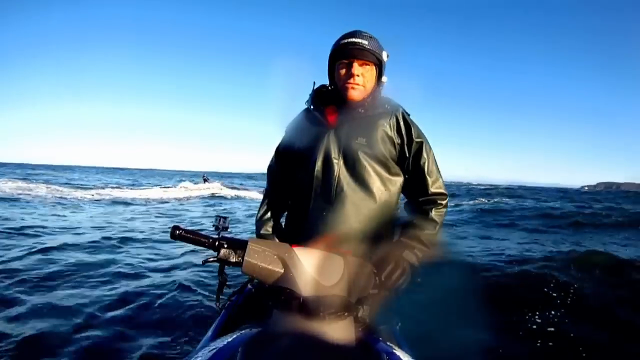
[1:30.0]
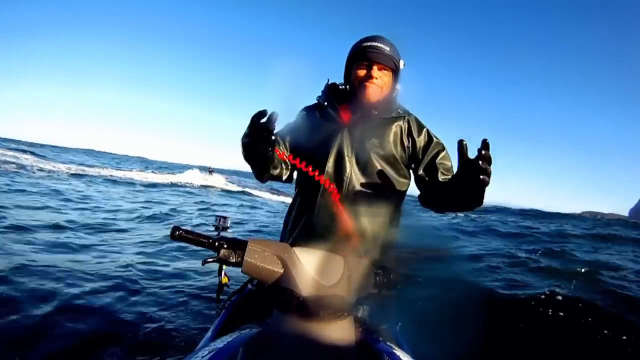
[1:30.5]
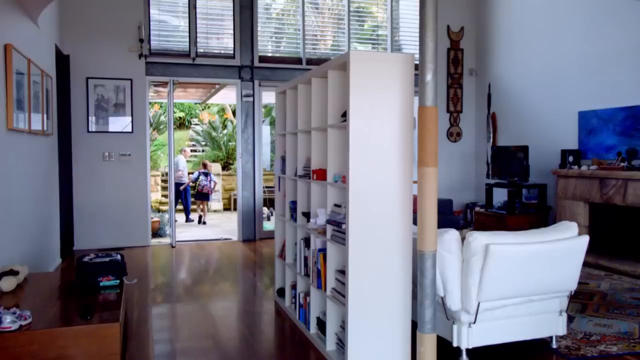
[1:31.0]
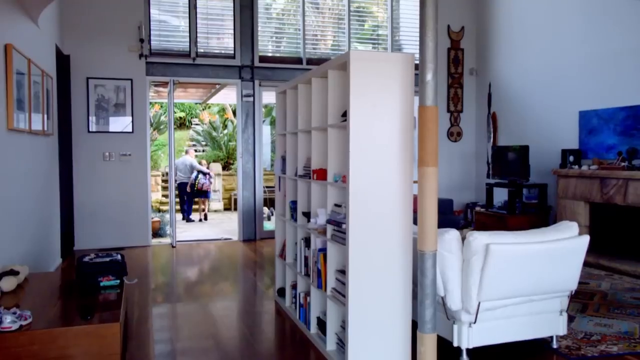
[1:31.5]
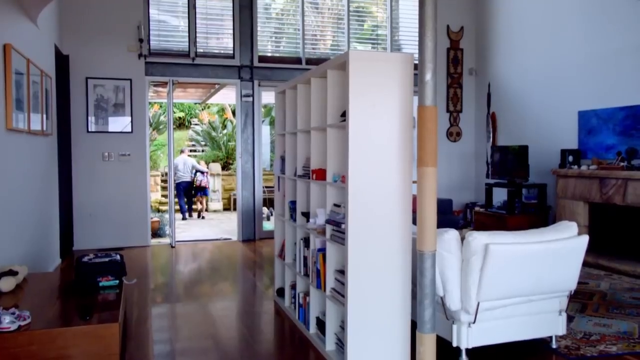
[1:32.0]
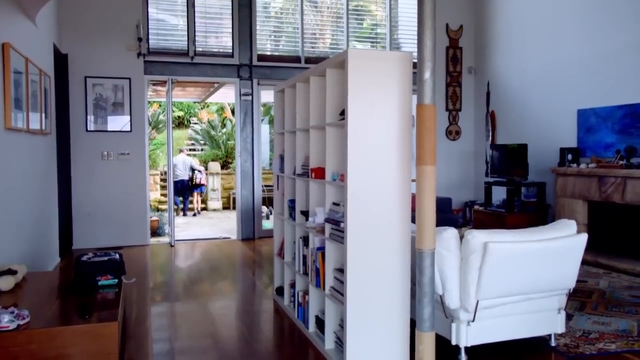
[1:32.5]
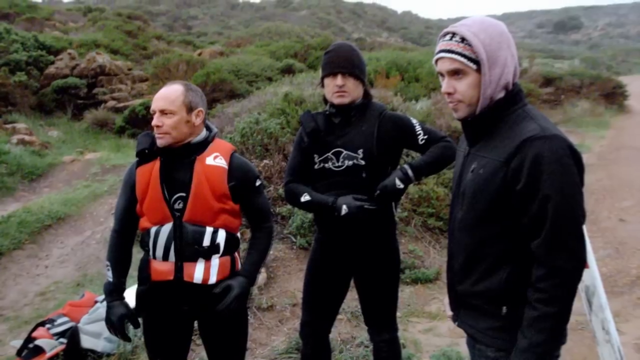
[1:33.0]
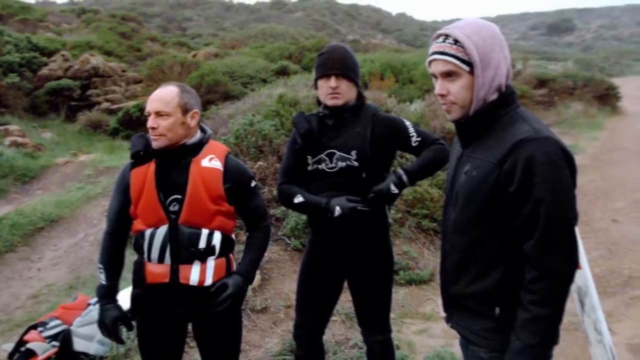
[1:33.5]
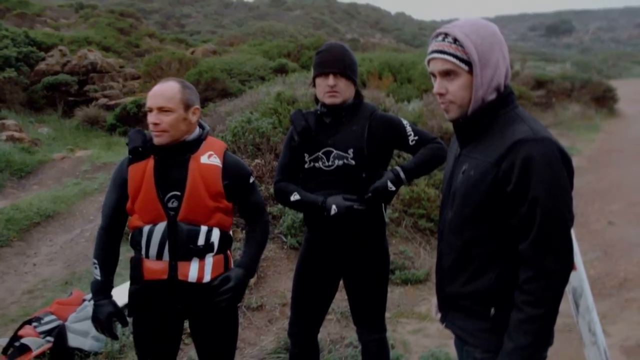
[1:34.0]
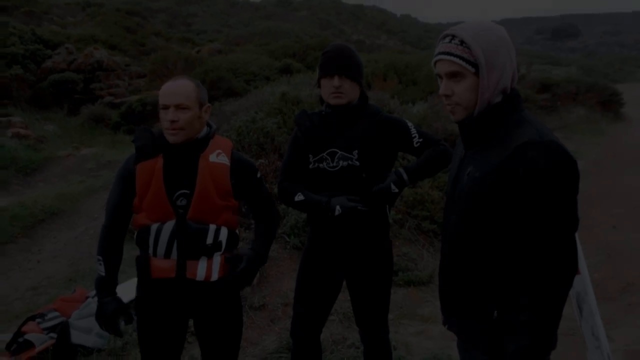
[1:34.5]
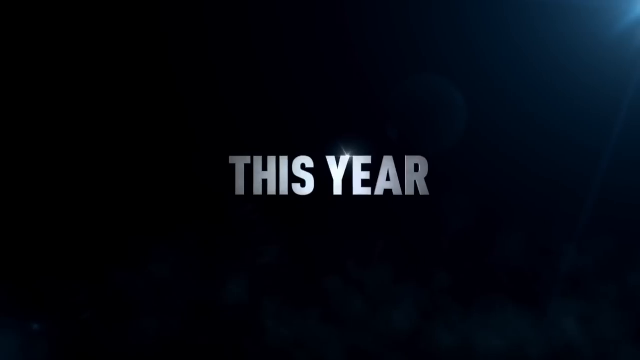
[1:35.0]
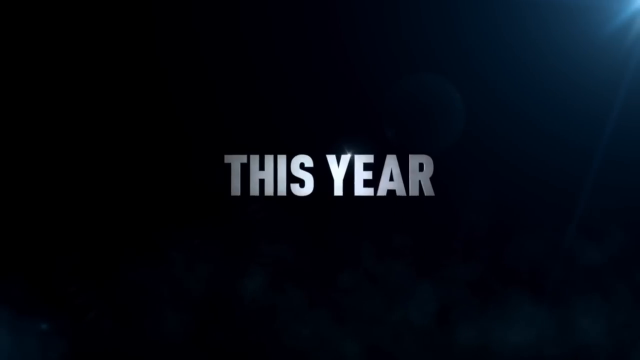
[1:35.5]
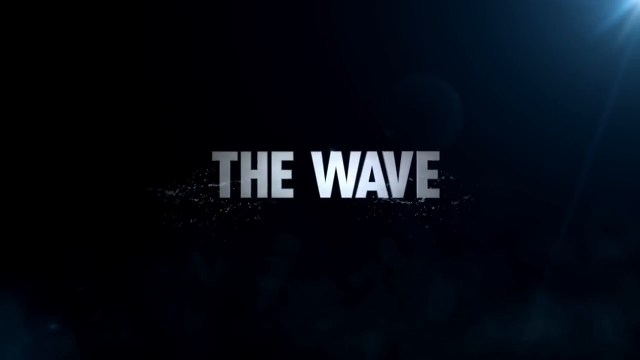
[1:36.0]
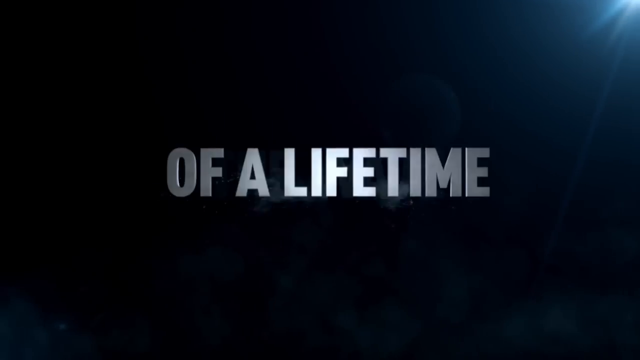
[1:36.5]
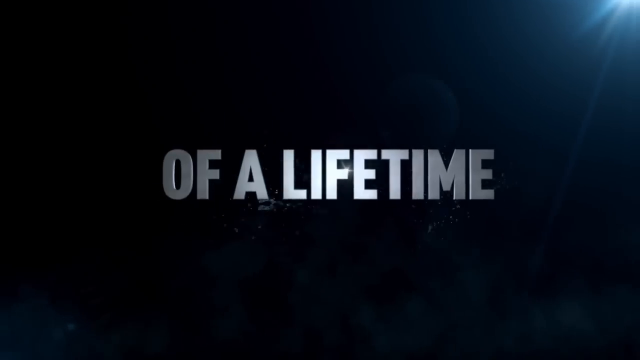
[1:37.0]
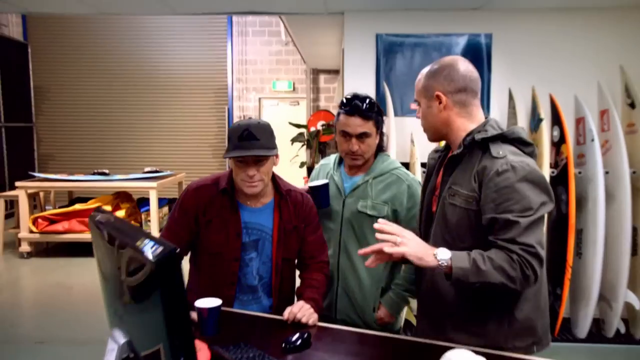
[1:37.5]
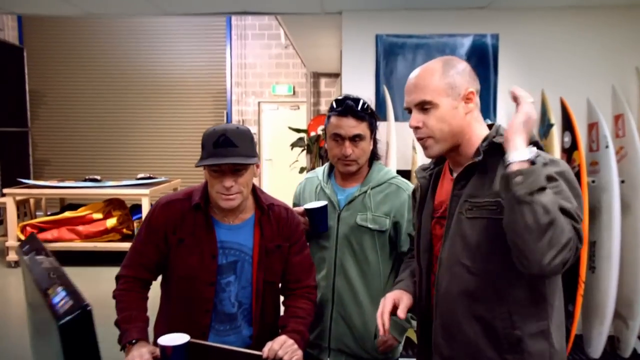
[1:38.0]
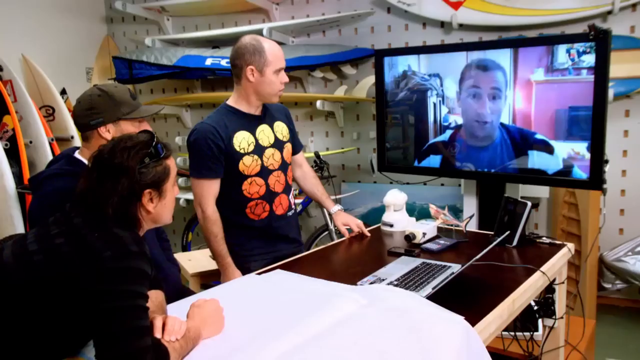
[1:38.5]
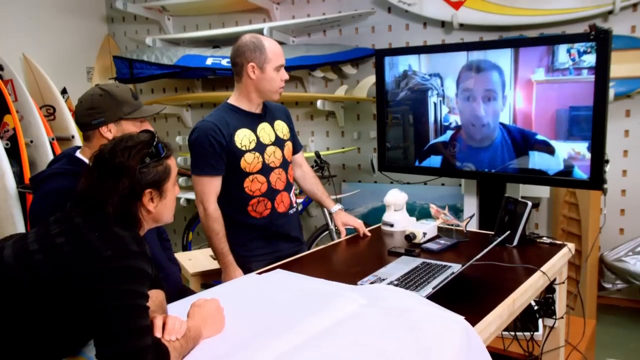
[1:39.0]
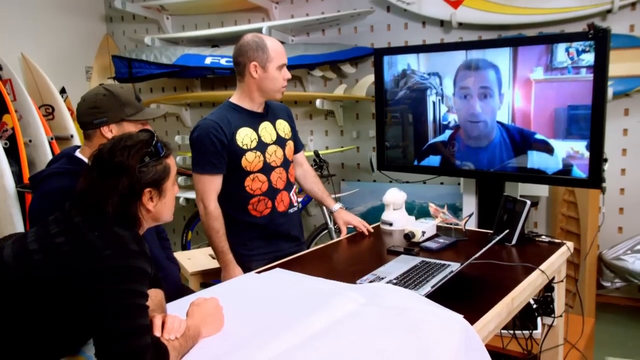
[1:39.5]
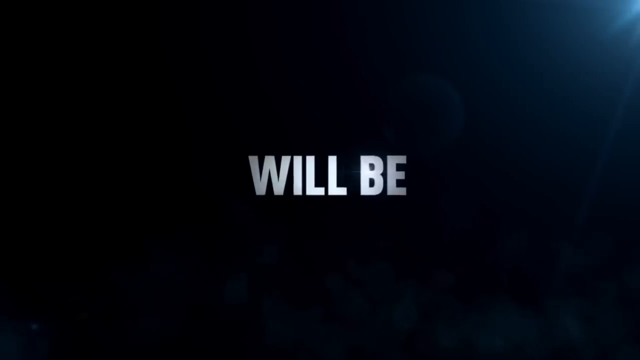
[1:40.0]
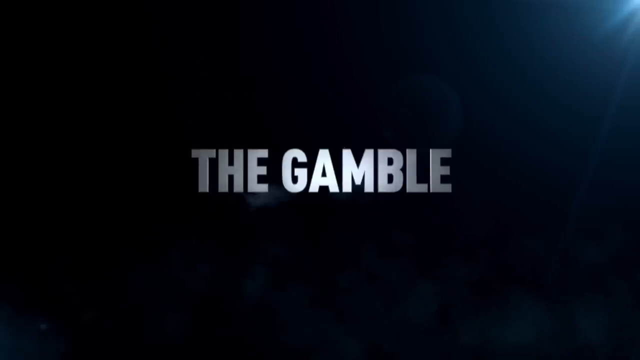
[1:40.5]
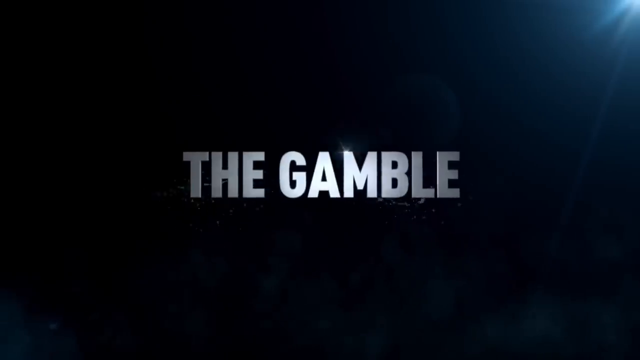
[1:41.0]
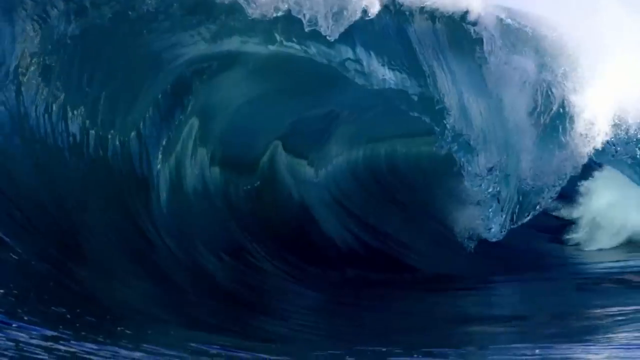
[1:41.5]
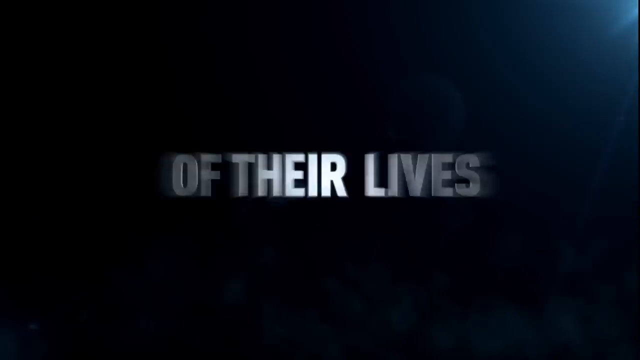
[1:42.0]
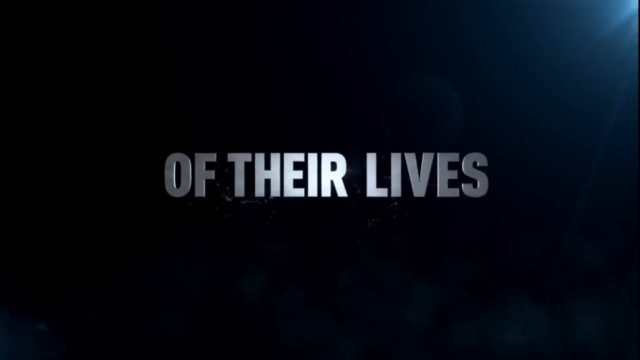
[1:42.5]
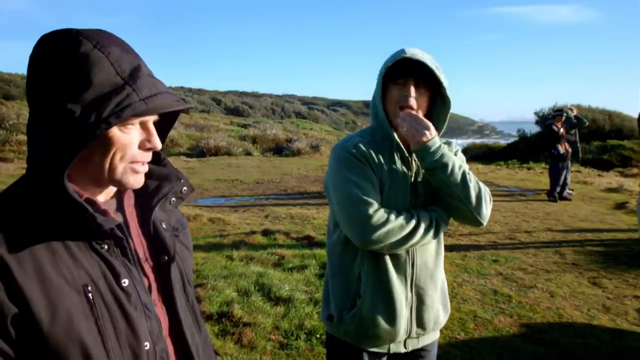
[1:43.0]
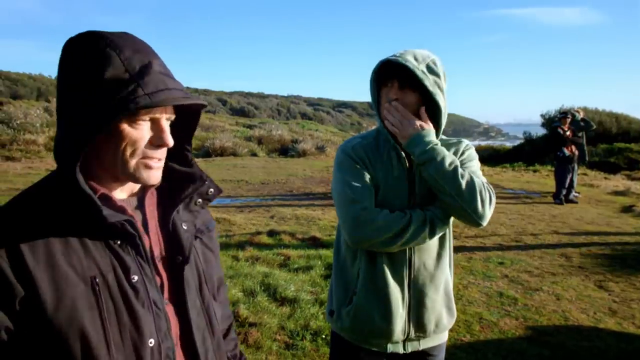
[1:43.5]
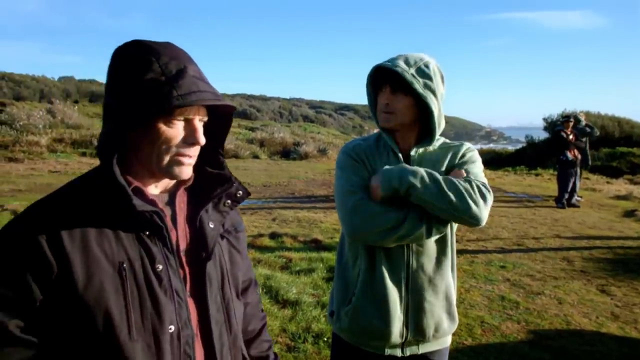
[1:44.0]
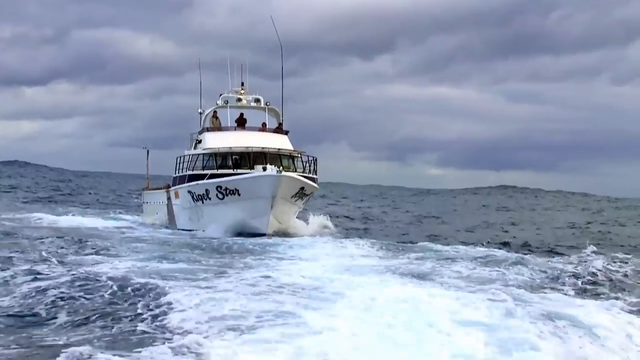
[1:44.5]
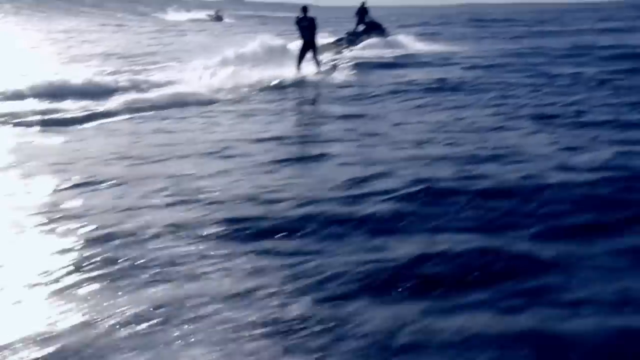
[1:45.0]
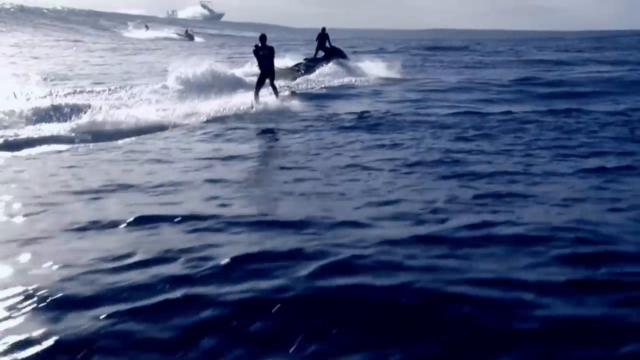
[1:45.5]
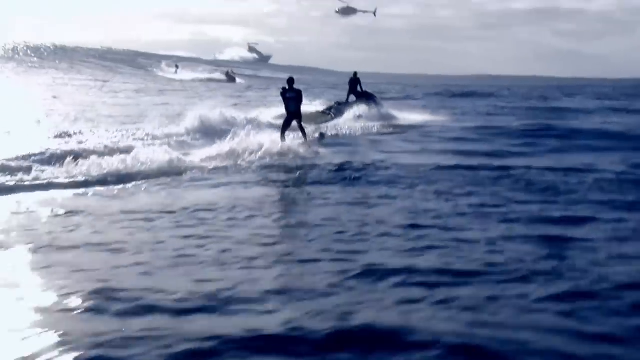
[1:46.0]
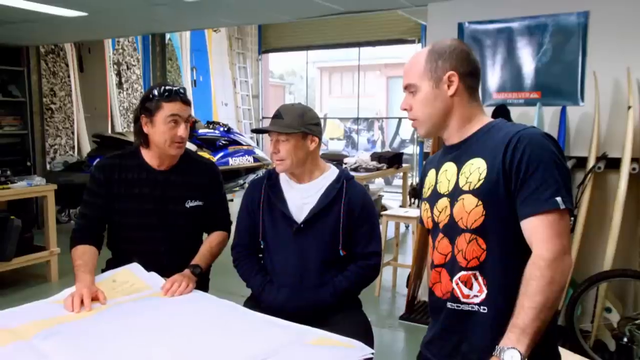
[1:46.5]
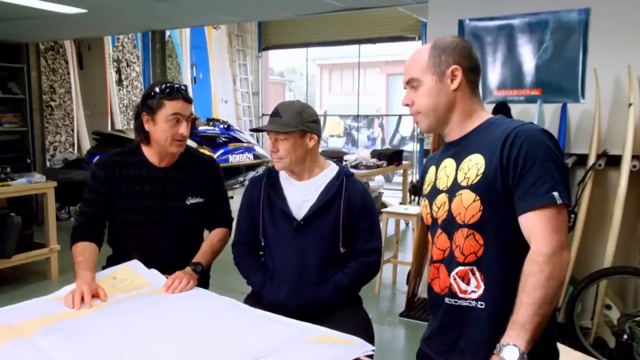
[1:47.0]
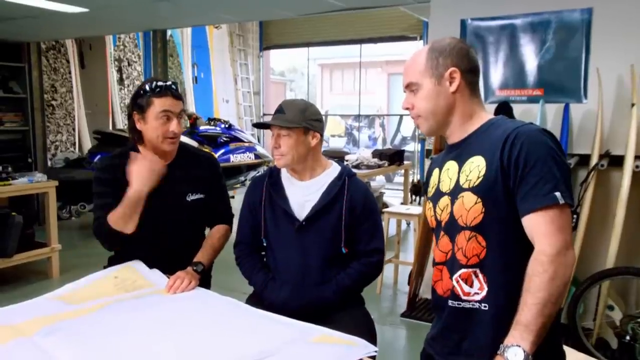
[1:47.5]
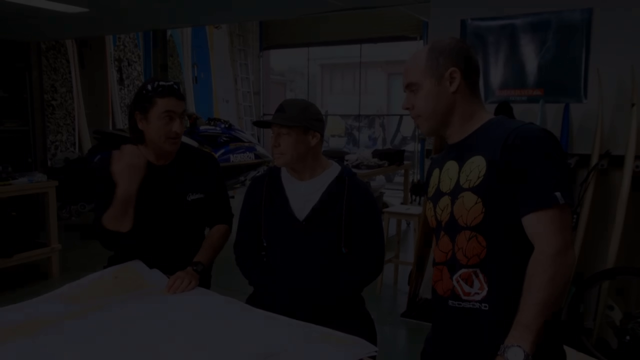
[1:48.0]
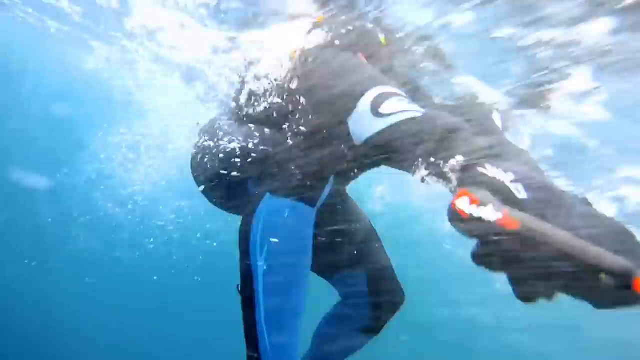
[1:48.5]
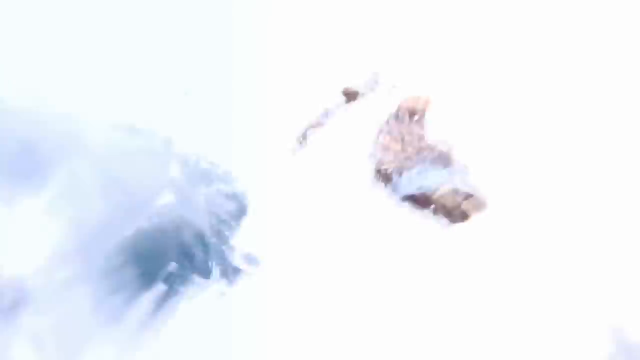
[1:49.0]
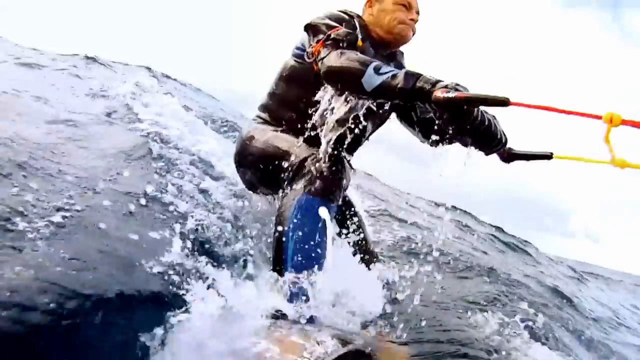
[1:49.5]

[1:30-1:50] A man talks to a group of other people. People are shown in many different areas, including bodies of water, and text reads "the one way for a lifetime." Someone appears on a TV screen in the background, and there are several transitions. People ride the waves on a large body of water.